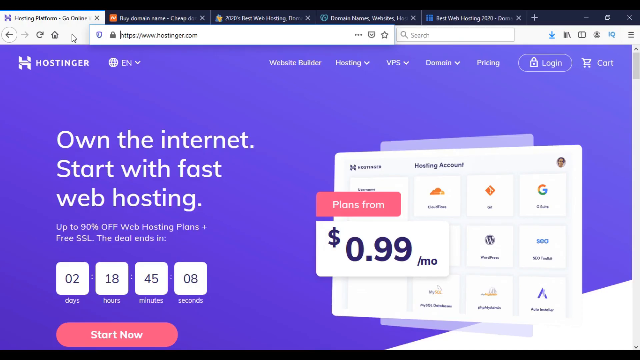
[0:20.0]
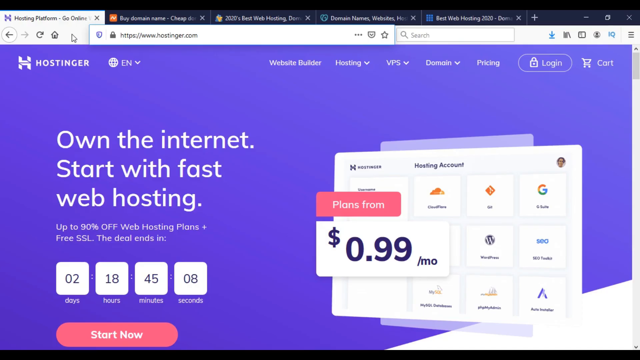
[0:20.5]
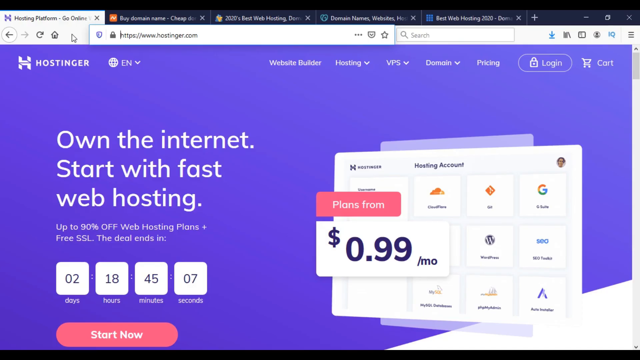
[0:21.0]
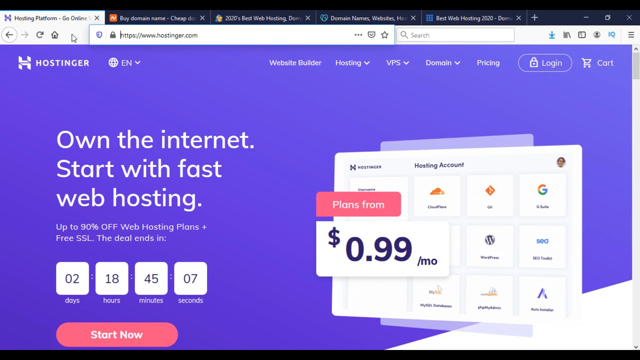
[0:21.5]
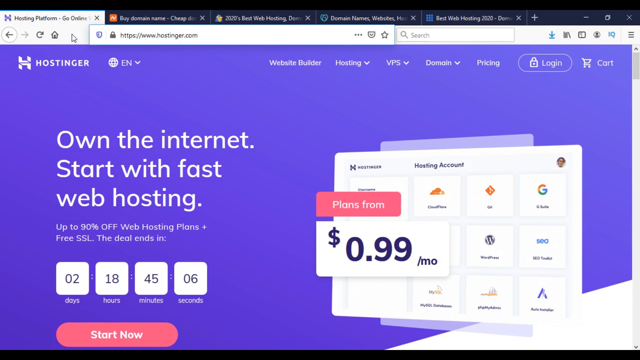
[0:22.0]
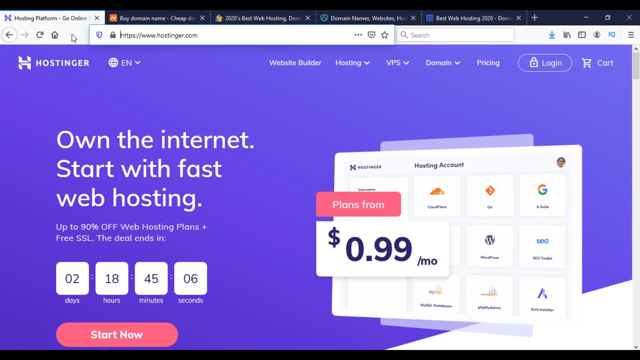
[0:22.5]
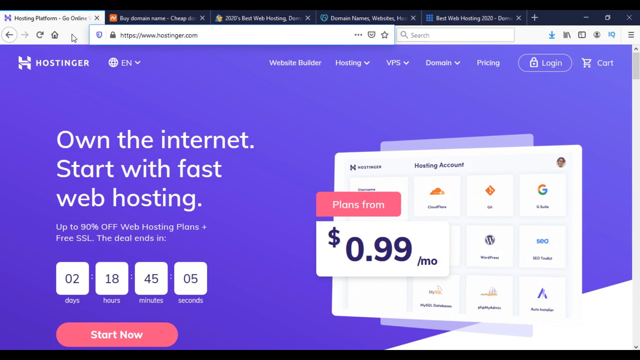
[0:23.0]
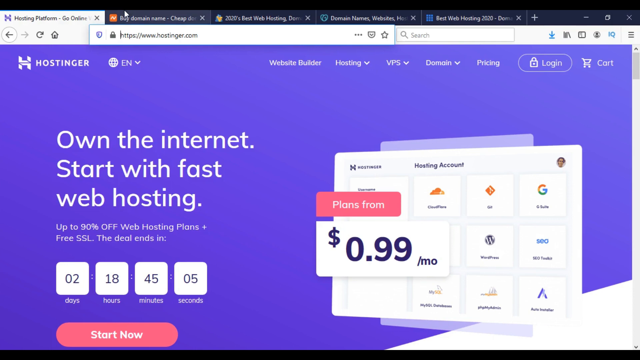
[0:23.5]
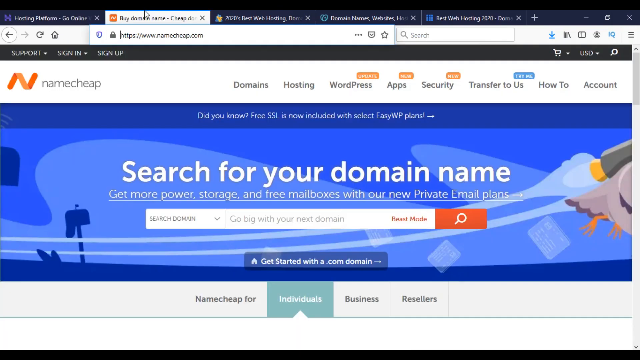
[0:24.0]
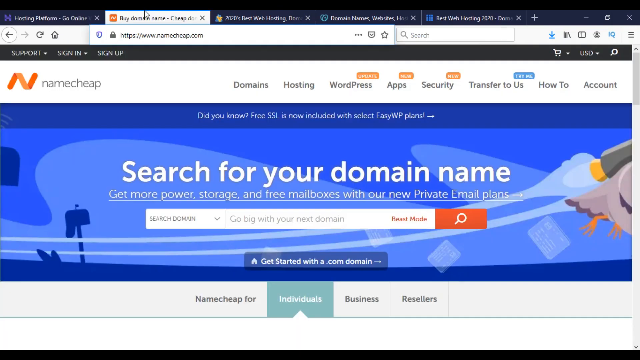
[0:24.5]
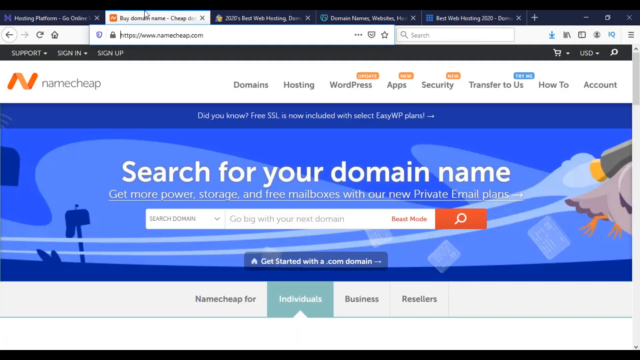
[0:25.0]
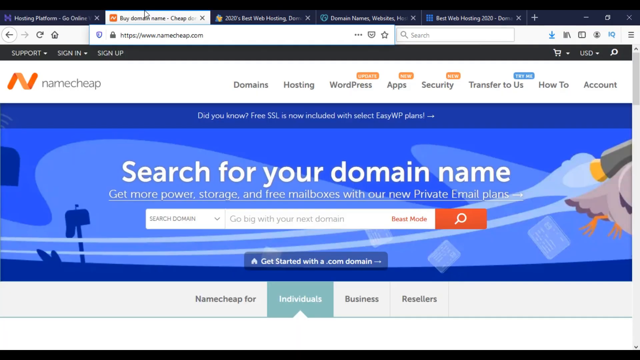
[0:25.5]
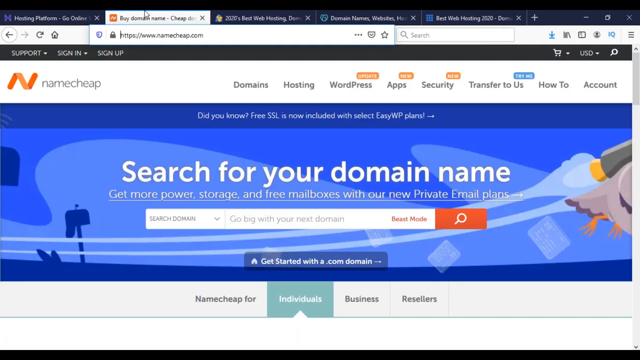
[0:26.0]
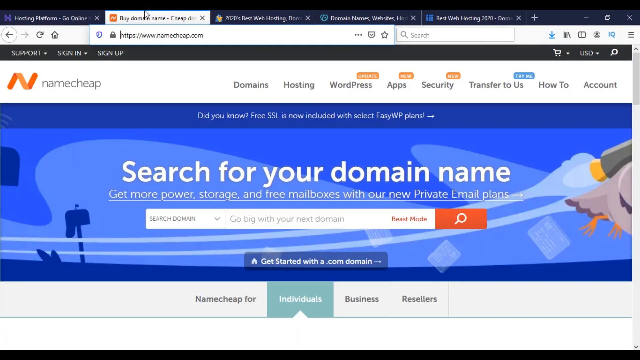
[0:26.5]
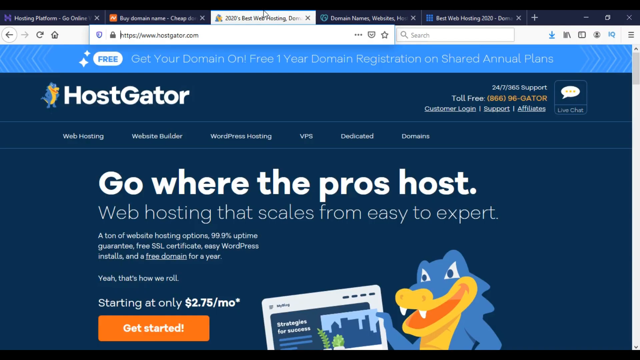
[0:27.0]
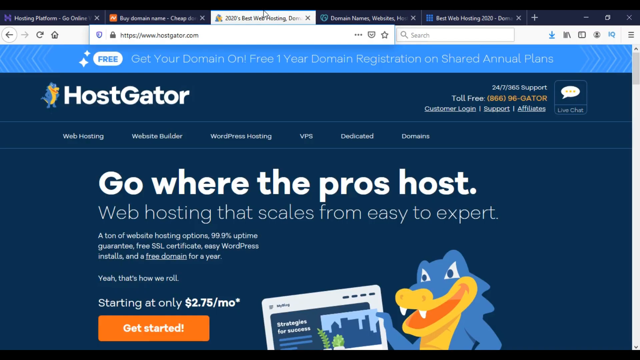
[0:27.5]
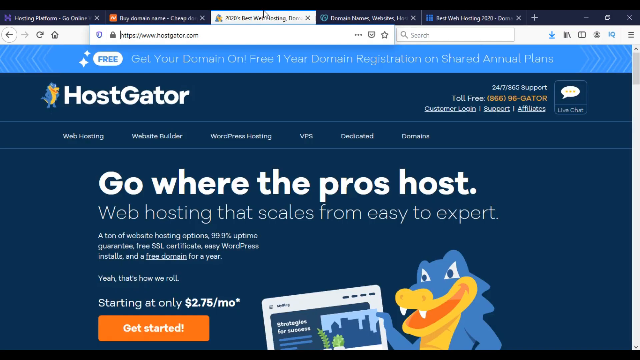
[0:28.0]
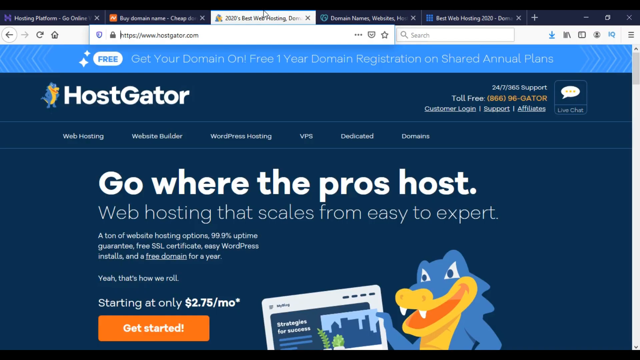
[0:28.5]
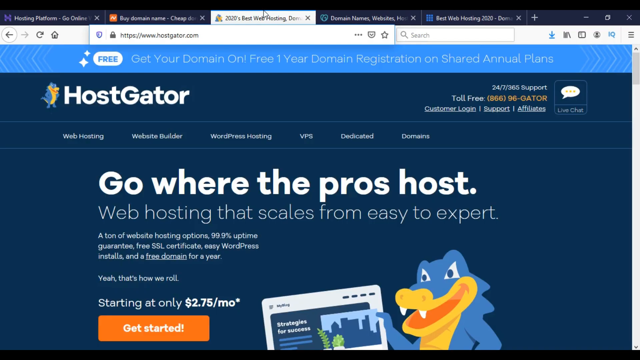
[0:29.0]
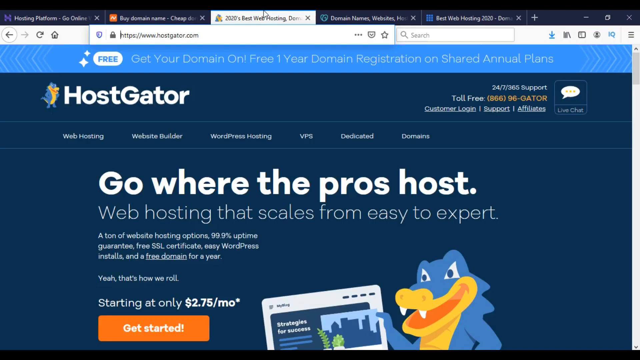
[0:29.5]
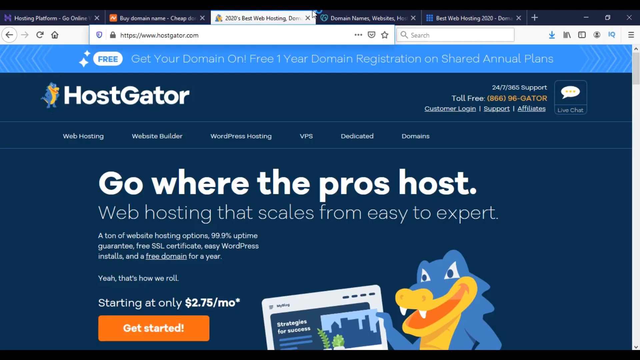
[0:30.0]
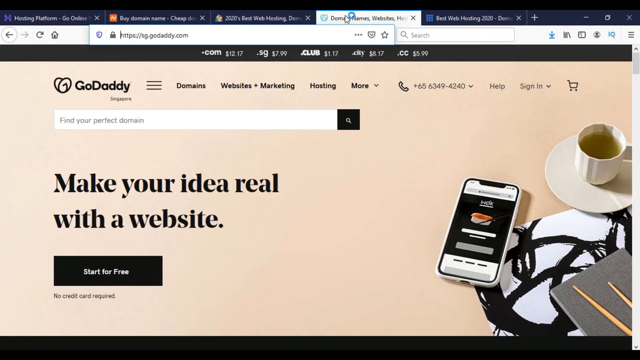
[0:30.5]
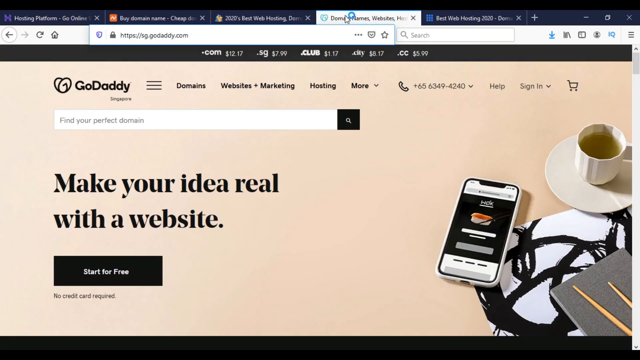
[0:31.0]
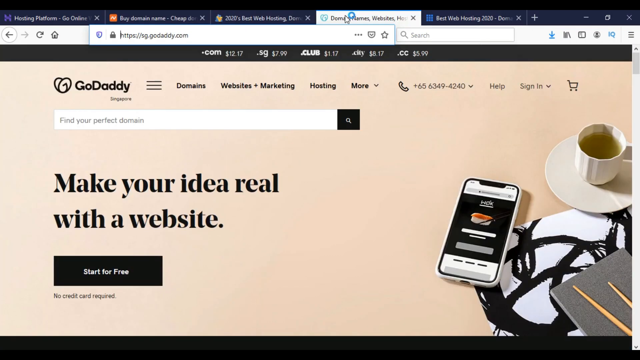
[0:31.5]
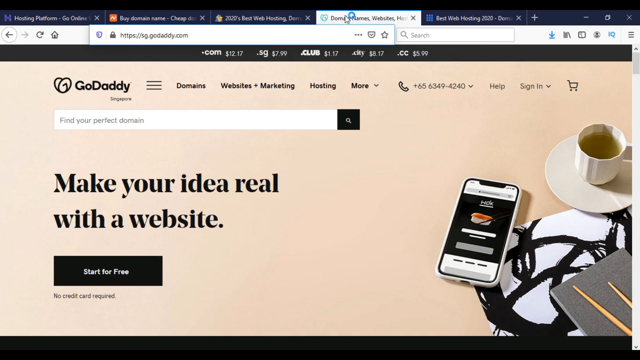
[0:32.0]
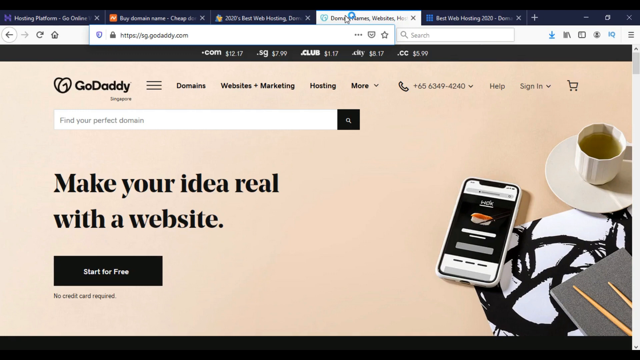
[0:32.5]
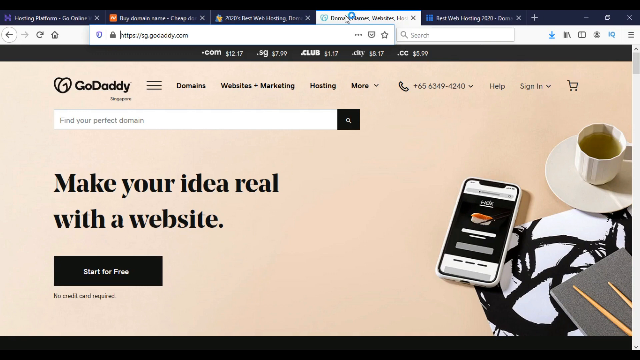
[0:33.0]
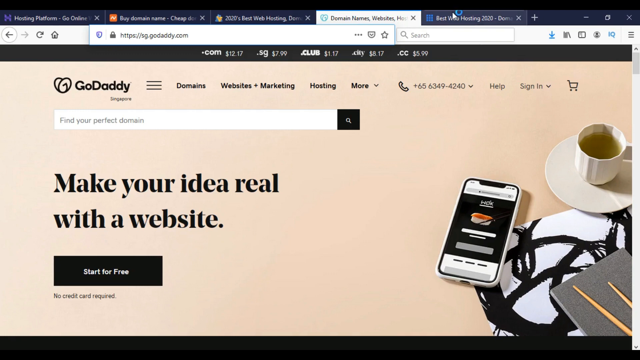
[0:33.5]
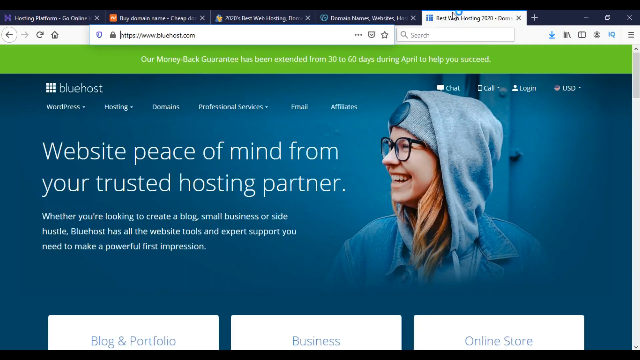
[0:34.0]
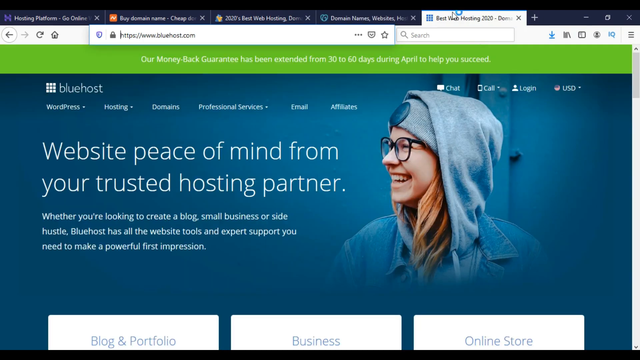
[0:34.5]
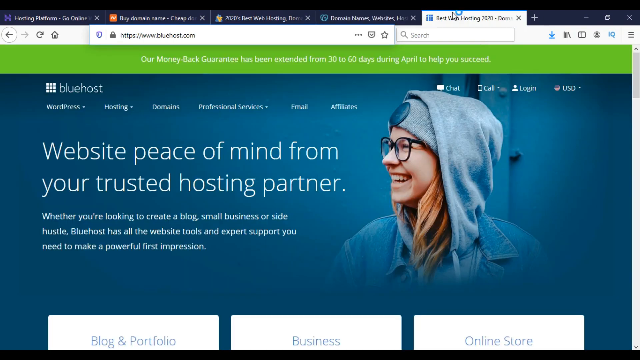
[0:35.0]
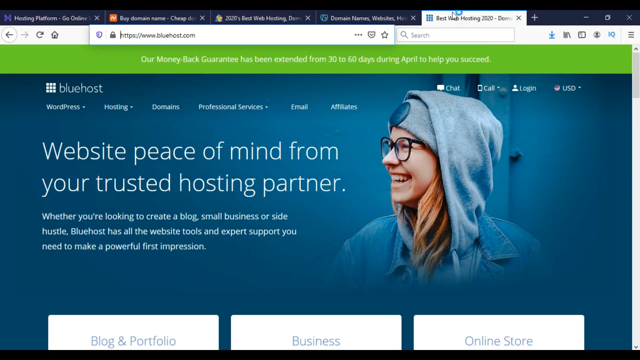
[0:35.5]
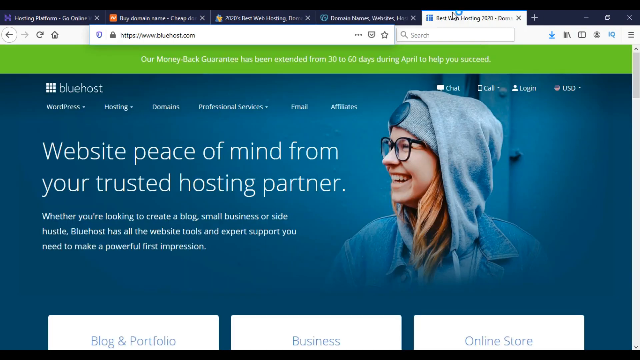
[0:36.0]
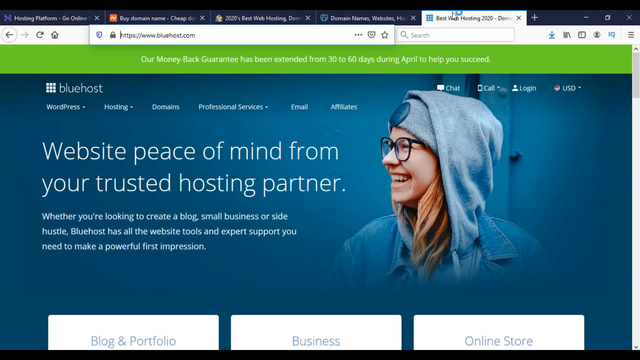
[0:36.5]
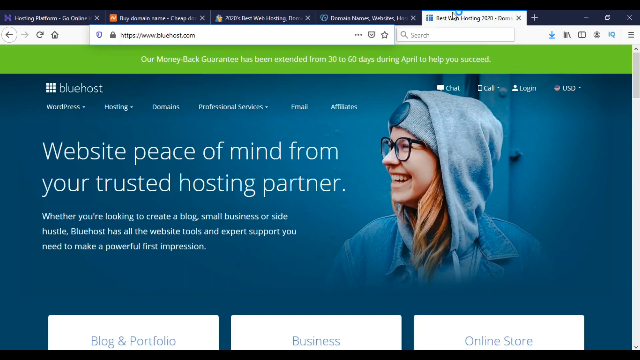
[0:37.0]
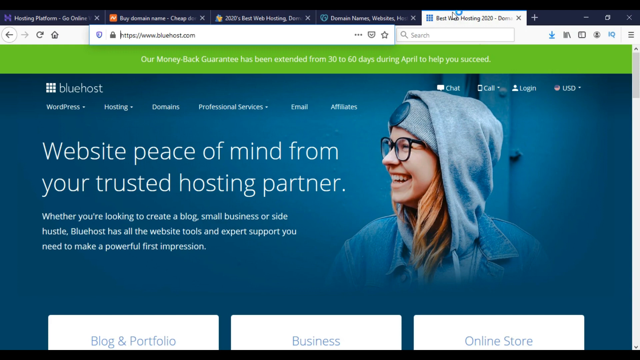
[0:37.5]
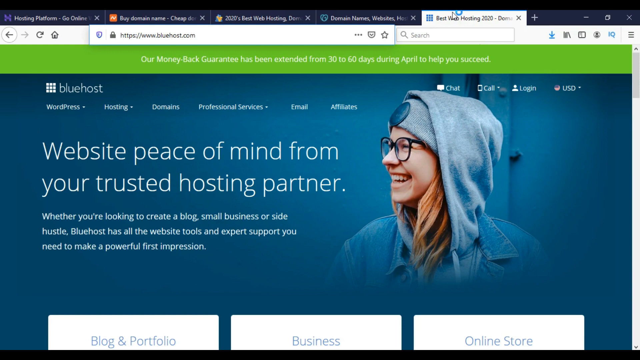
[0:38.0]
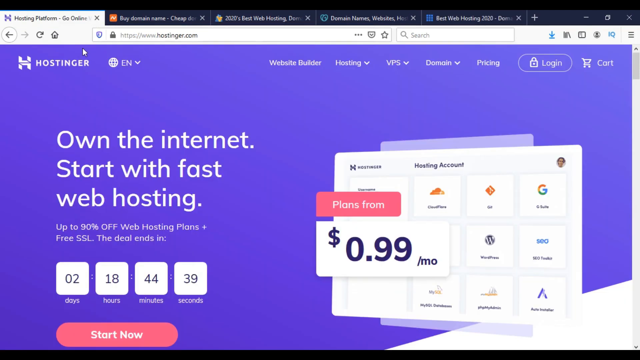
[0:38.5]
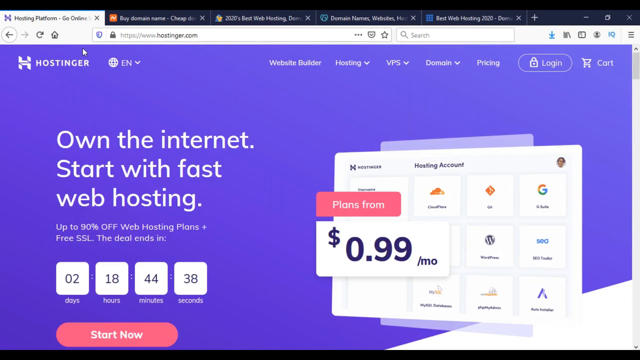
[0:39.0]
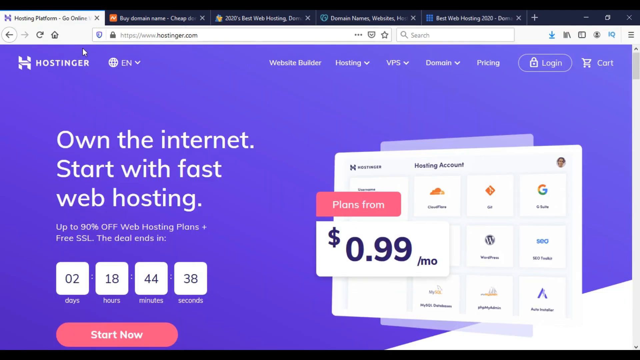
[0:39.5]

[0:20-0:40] A web page with a solid purple background shows the name Hostinger at the top and the text "on the internet, start with fast web hosting." At the bottom are the numbers 2, 18, 45 and 8, apparently a clock, though what they are is not clear. On the side is another element that says "plans from 99 cents a month." Next comes a HostGator page that says "go where the pros host," then a GoDaddy page that says "make your idea real with a website," and a Bluehost page that says "website peace of mind from your trusted host partner."